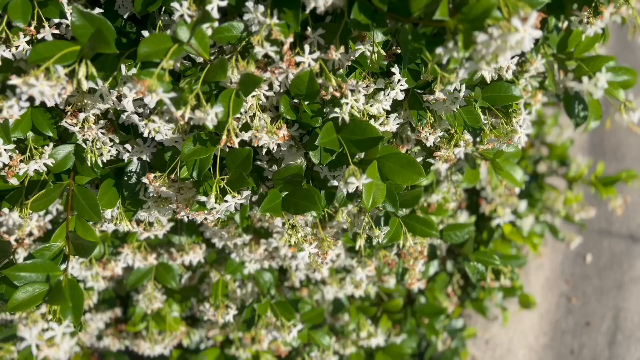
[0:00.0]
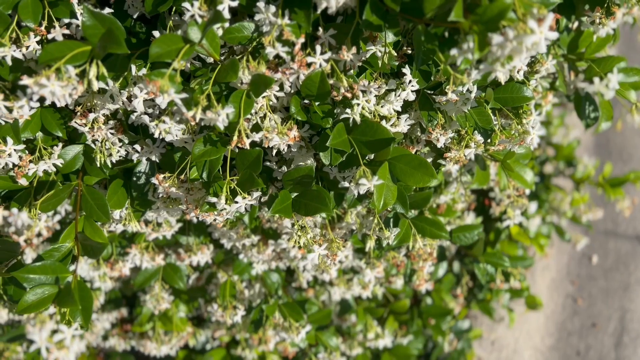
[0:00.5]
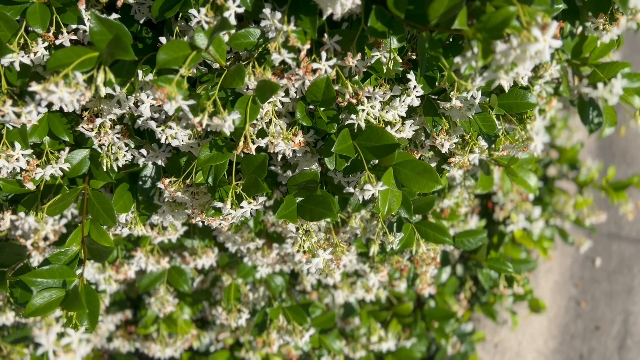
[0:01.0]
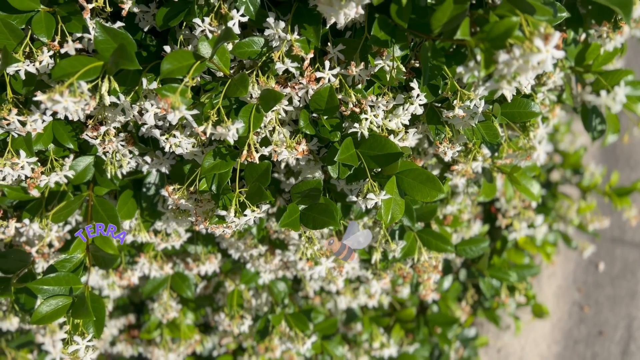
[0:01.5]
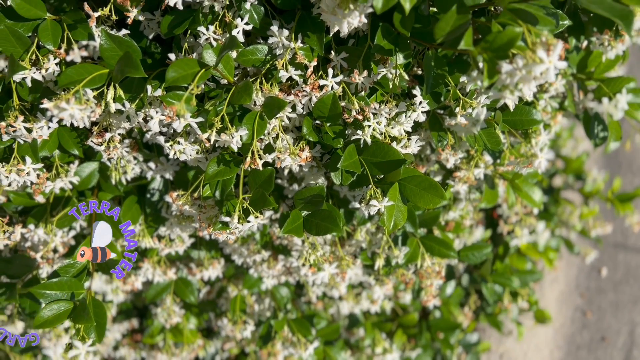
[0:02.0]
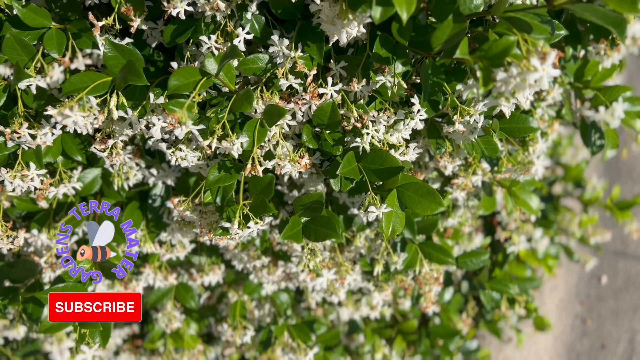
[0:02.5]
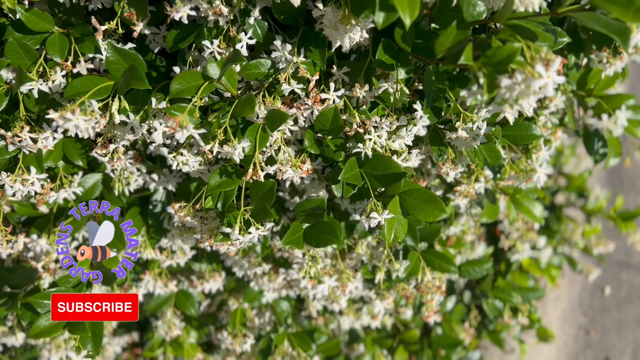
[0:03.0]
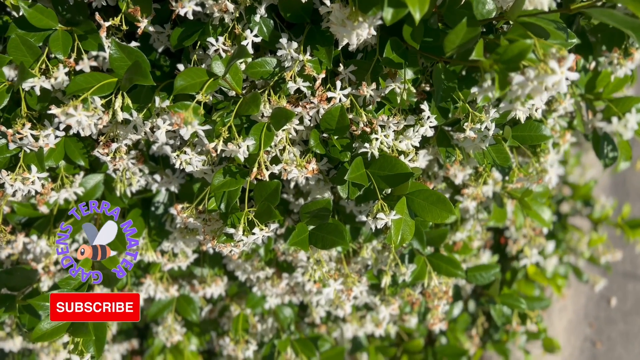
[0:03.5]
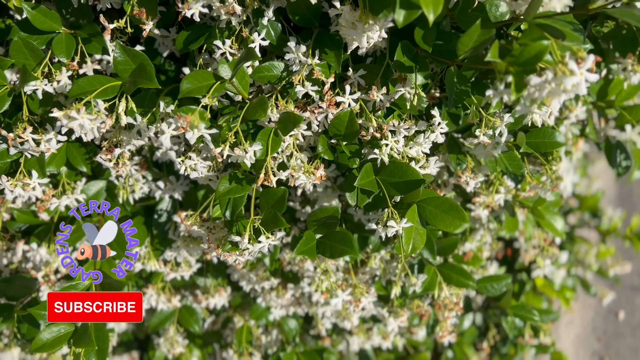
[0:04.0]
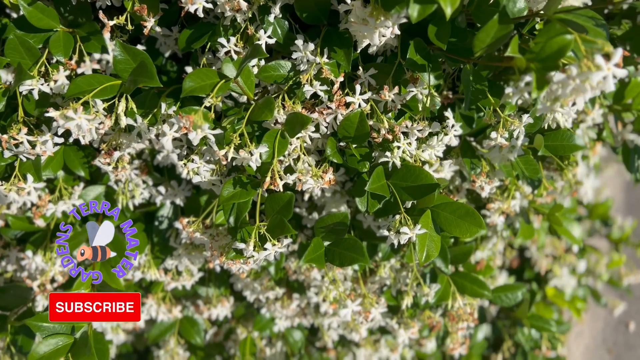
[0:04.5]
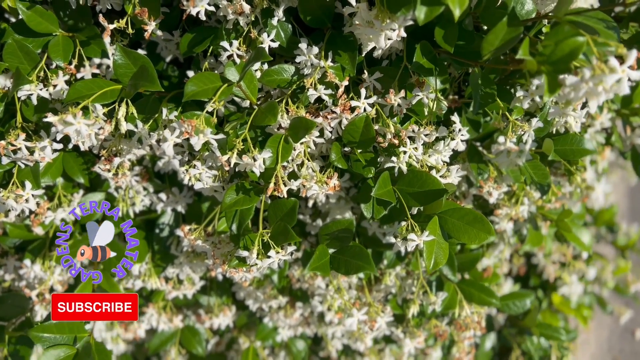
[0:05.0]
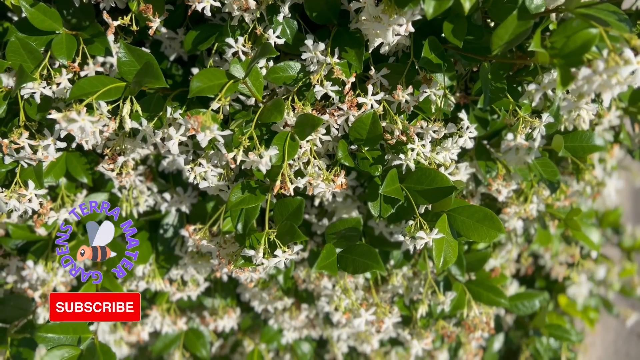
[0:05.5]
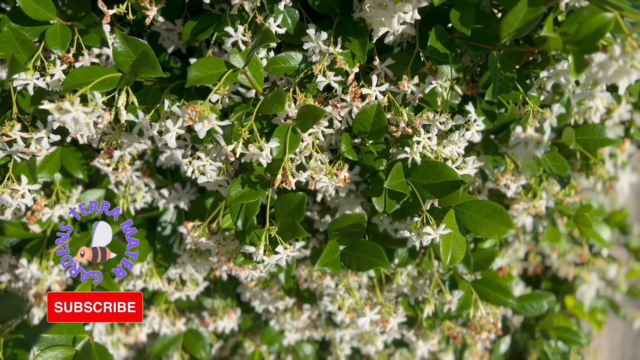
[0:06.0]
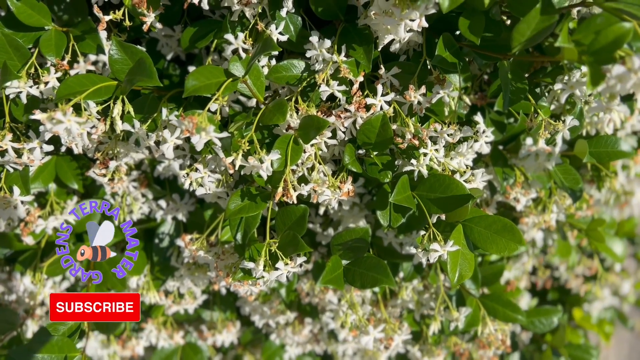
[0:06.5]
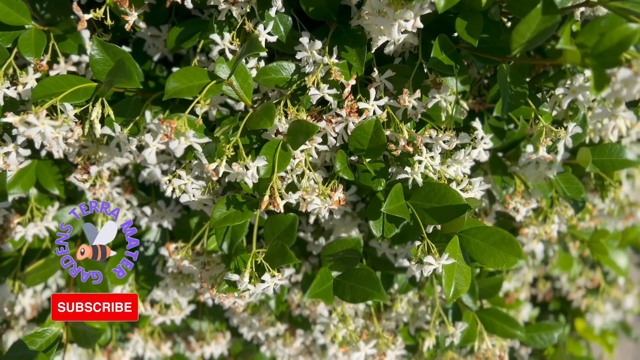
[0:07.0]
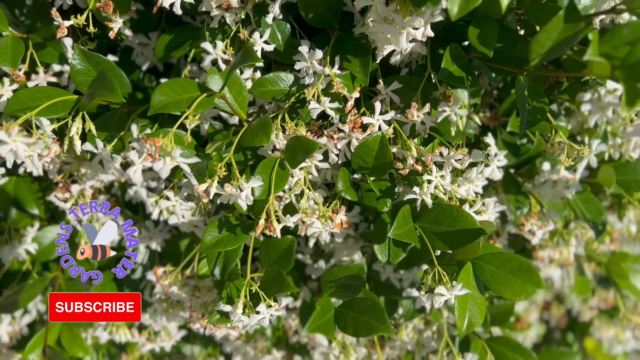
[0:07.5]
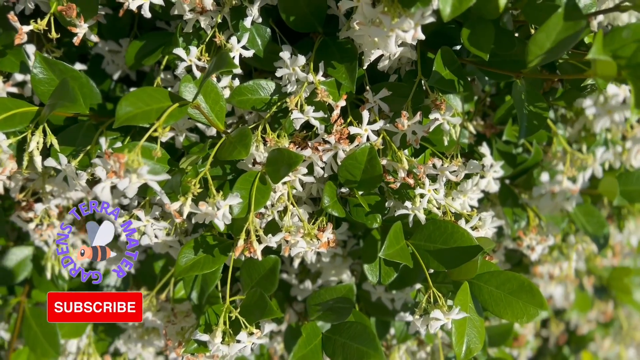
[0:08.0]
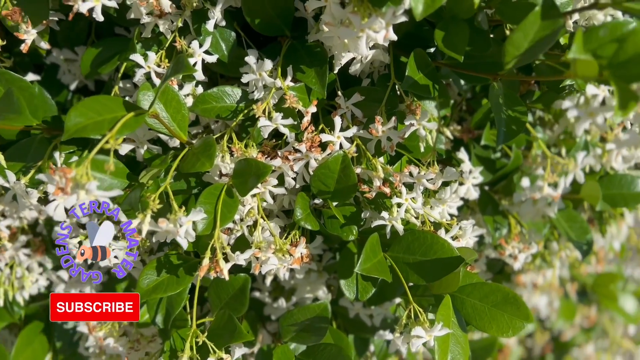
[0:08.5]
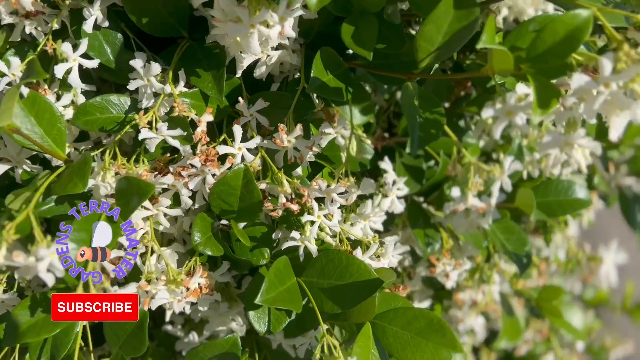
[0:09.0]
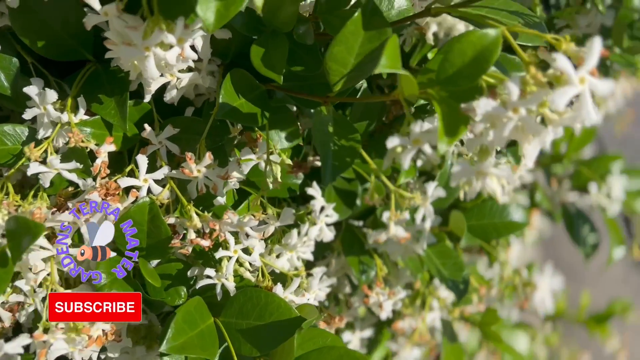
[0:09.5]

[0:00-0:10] Plant life with small green leaves and little flowers with small white petals appears. Text reads "gardens", "terra" and "mater" in purple, apparently the channel name, with the words arranged around a bumblebee in the middle. Underneath is a red rectangle with "subscribe" written on it in white. The wings of the bumblebee logo move up and down as if the bee is actually moving.